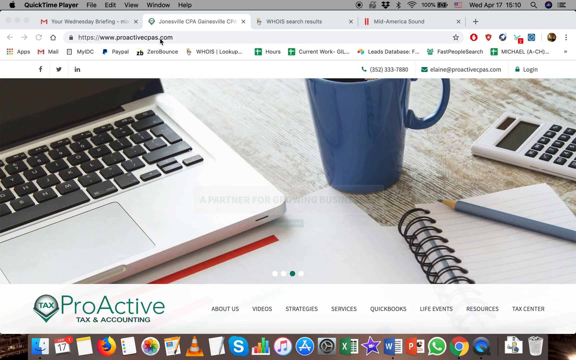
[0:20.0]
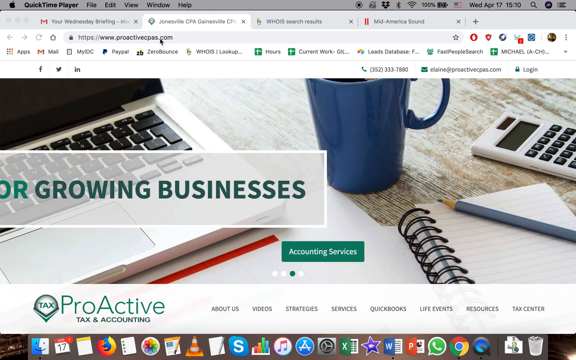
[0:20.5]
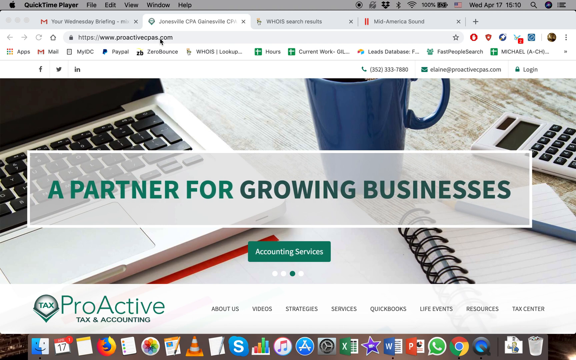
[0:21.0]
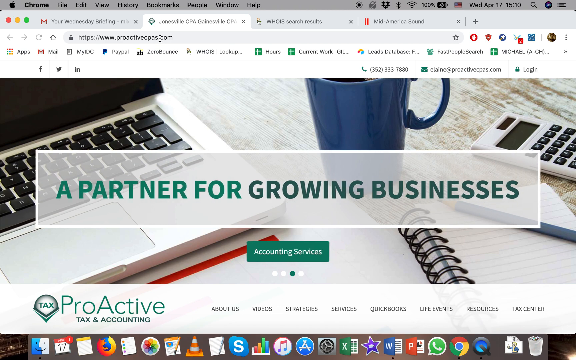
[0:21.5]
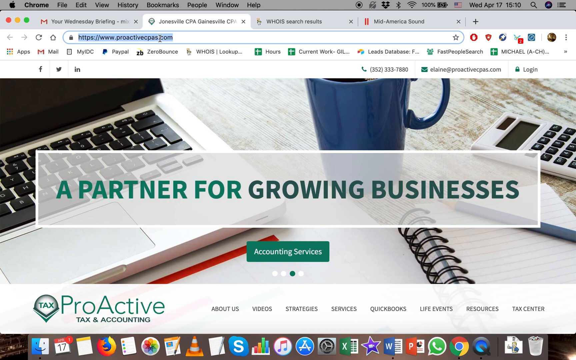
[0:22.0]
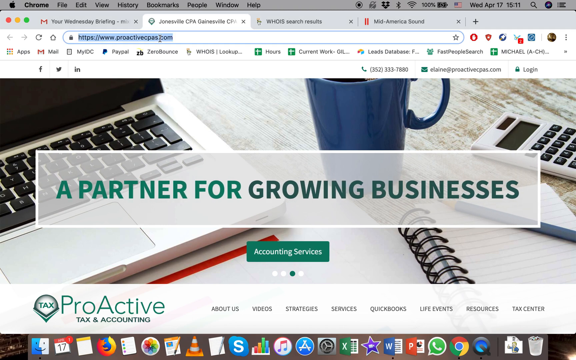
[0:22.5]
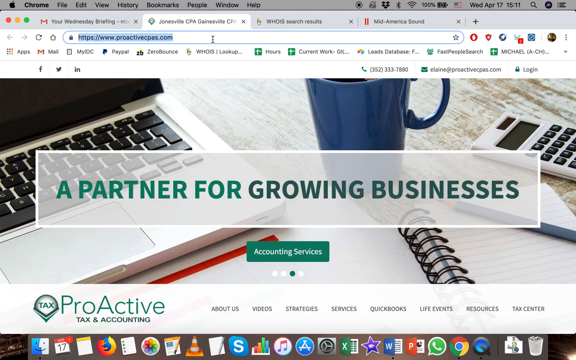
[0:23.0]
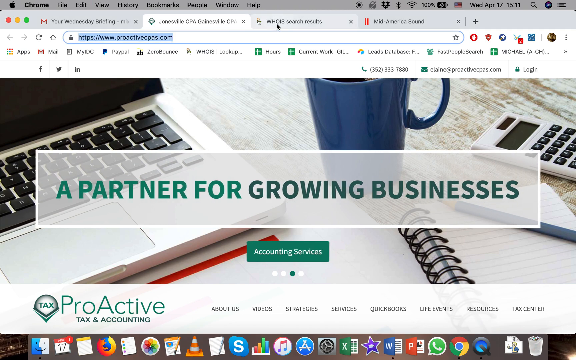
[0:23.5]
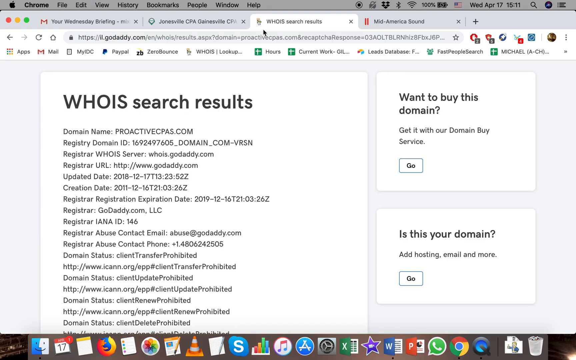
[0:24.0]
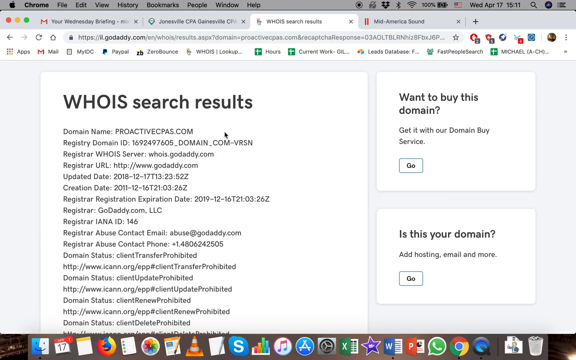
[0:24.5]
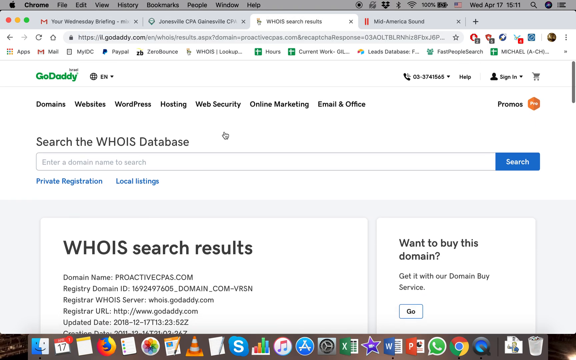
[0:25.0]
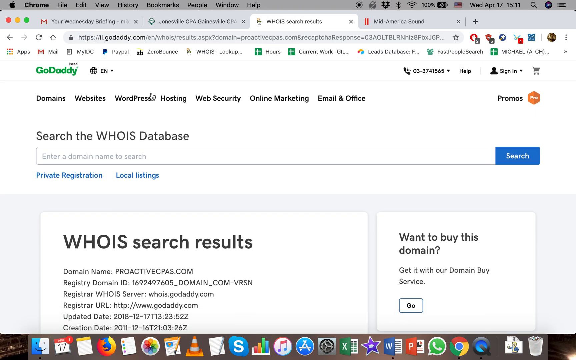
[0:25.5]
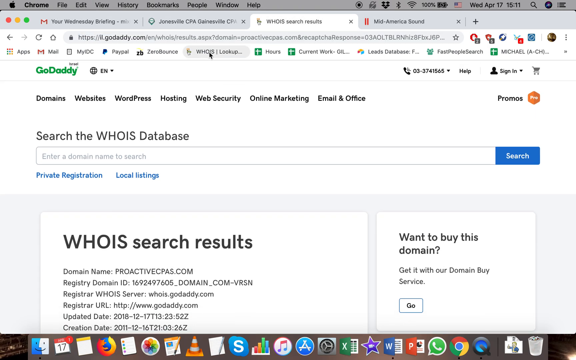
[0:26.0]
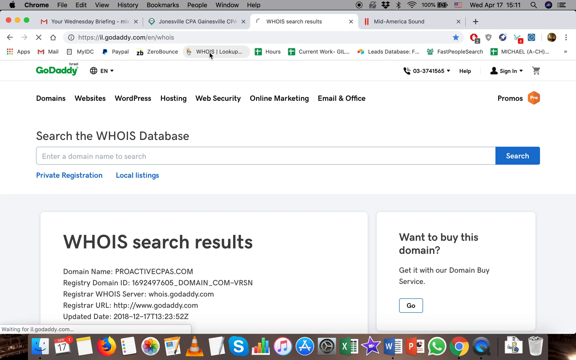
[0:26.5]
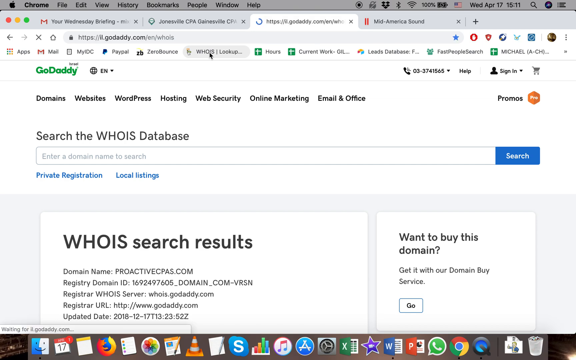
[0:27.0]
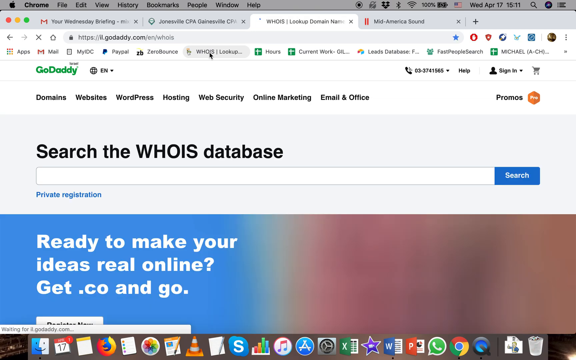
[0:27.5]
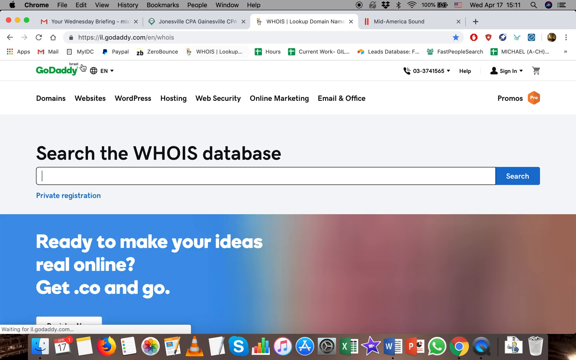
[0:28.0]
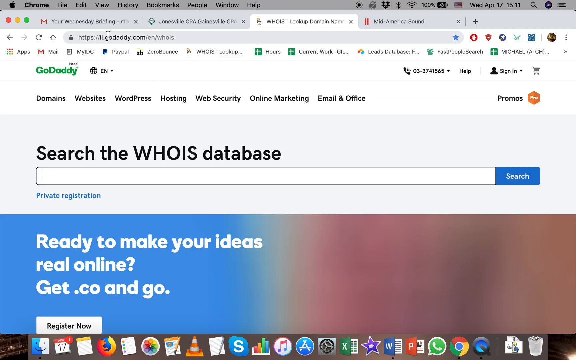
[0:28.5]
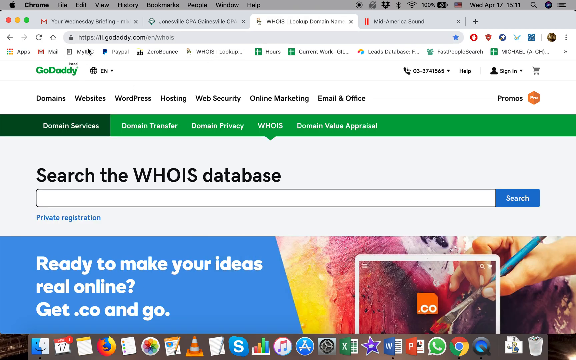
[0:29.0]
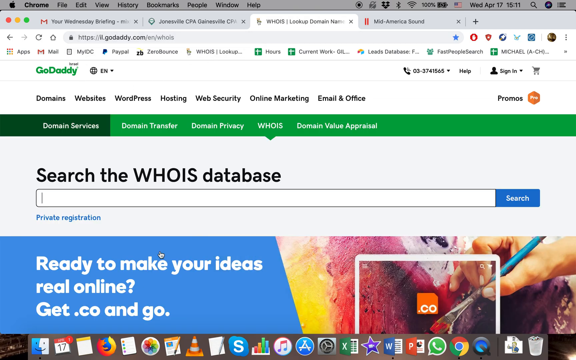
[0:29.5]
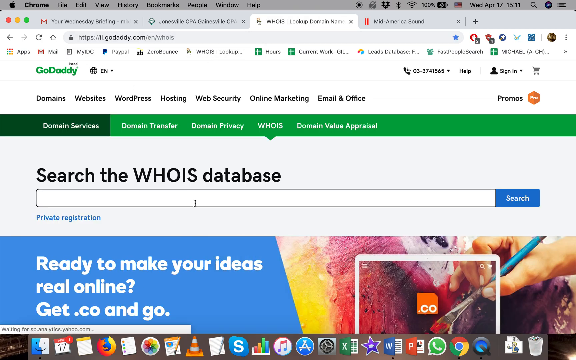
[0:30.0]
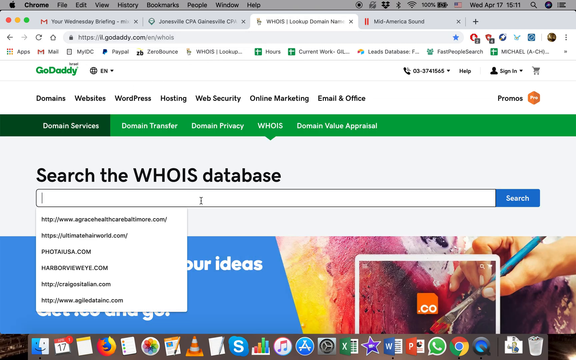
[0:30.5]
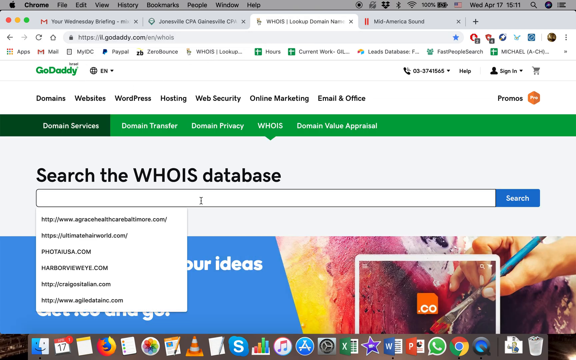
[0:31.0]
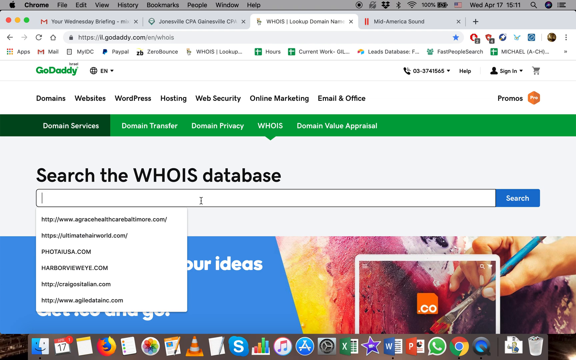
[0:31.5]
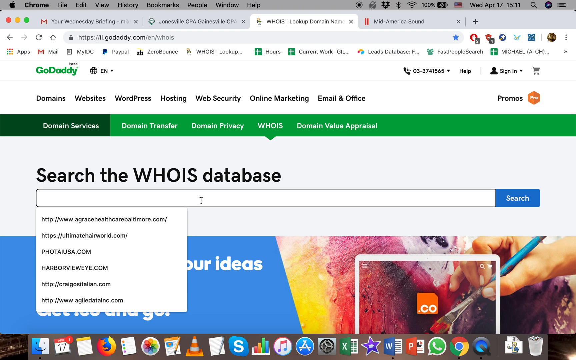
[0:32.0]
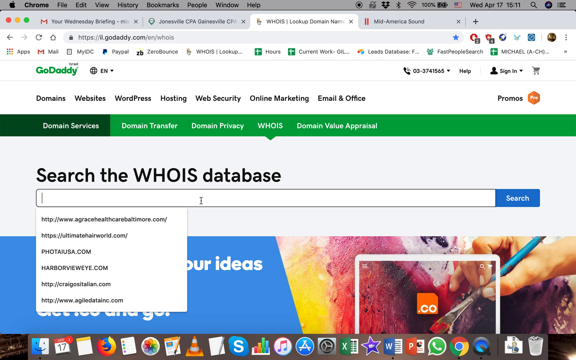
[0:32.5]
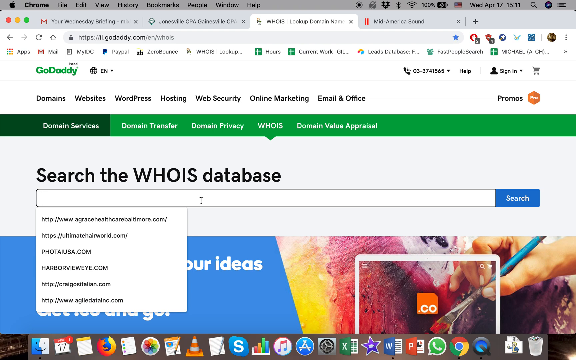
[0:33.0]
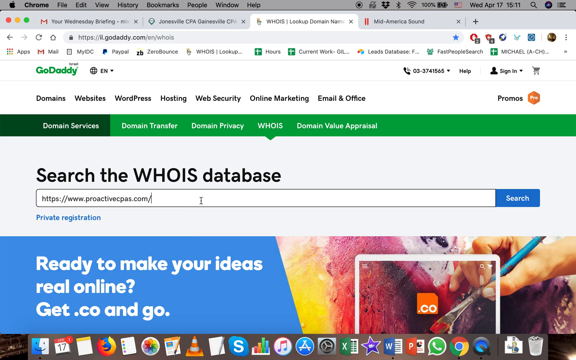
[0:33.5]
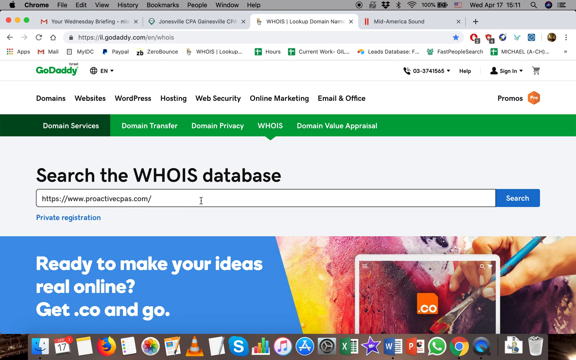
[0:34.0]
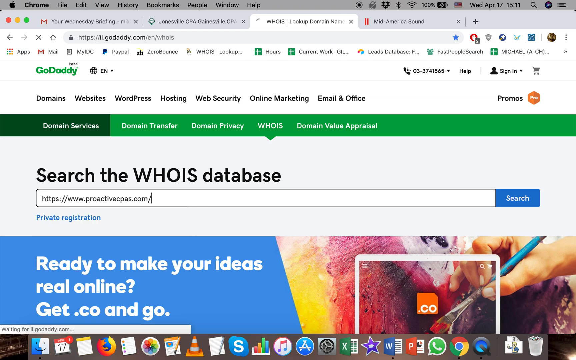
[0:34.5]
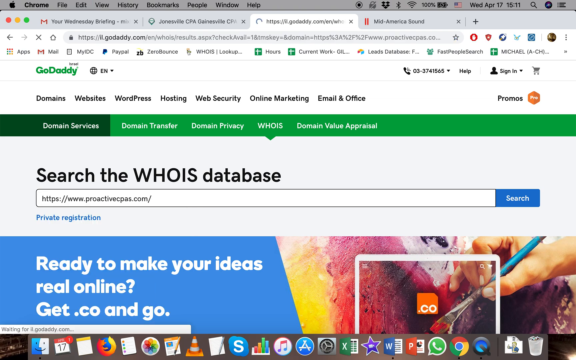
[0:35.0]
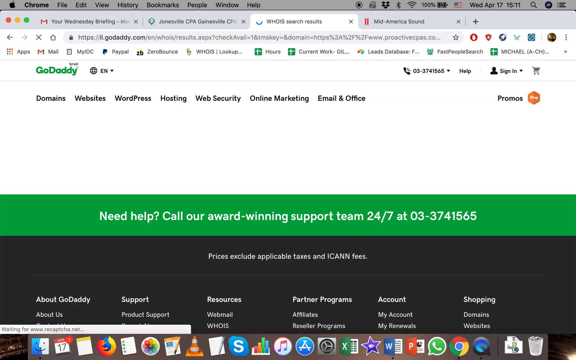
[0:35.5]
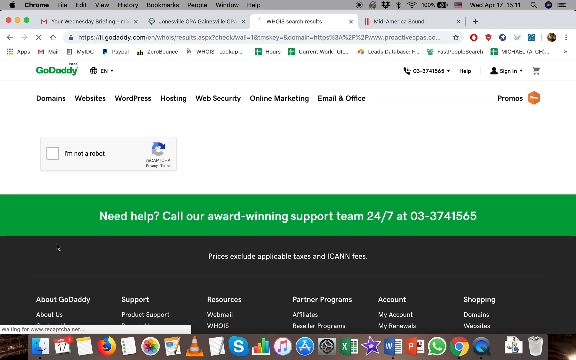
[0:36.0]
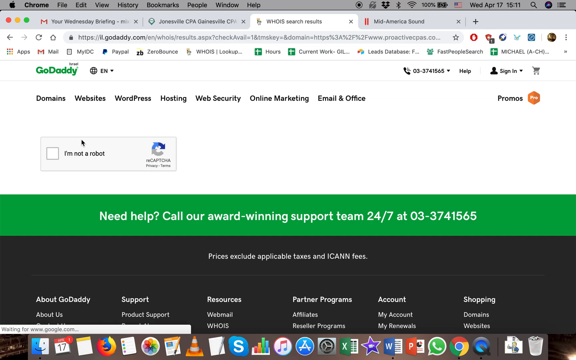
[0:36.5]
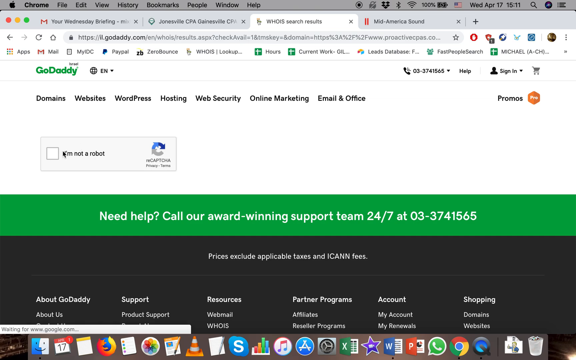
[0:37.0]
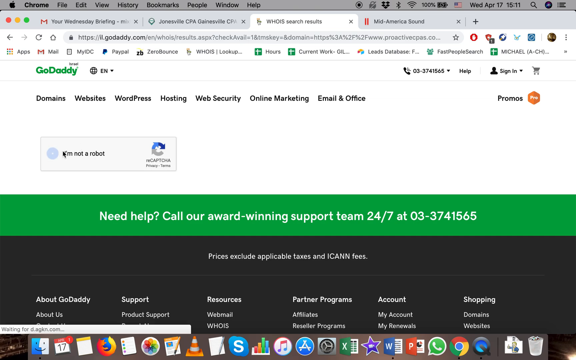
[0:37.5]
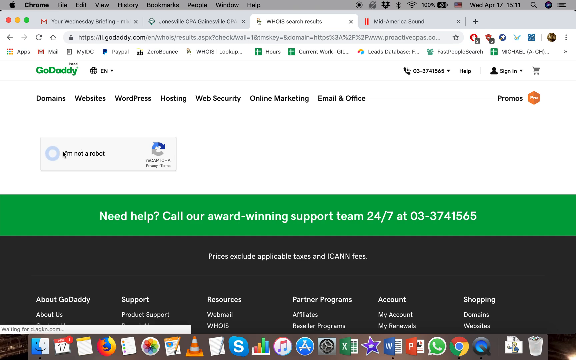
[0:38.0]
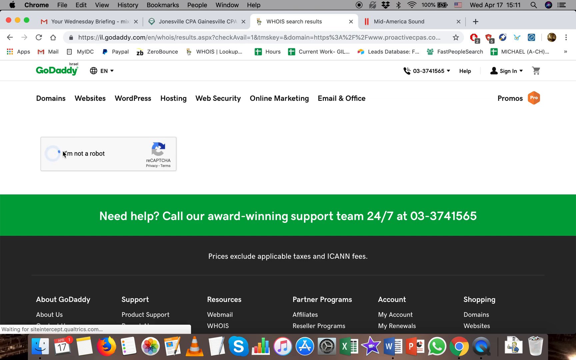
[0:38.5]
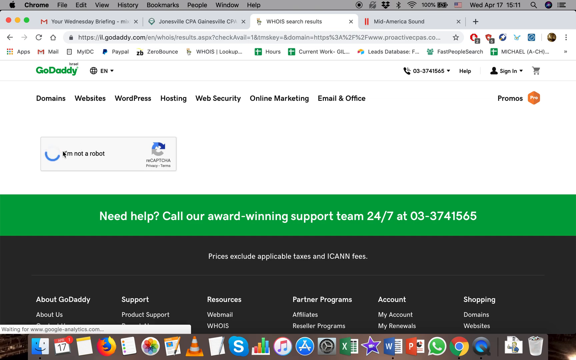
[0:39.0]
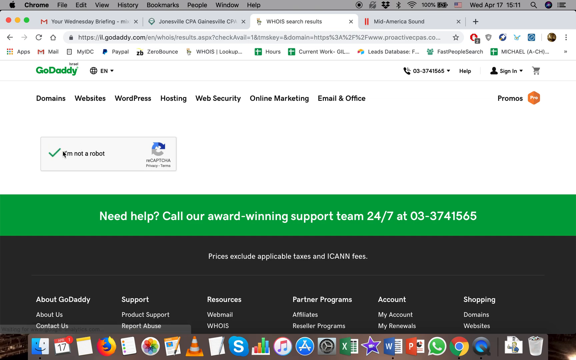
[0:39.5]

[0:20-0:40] The front page stays on screen until the user finally clicks and goes to a search page, apparently on a different website: the URL is now GoDaddy, and it is a Whois database search. The user hovers the mouse over "websites," just below GoDaddy, among a bunch of options: domains, websites, WordPress, hosting, web security, online marketing, and email and office. The user then goes to the favorites bar and clicks Whois, the search database. They click the search bar, which shows a list of earlier searches, including AgriHealth Baltimore, Time Matter Hareward, PhotoUSA, and more. They type in proactivecpas.com and then must complete a verification that they are not a robot. They click the checkbox, it loads for a bit, and then a check mark appears confirming they are not a robot.